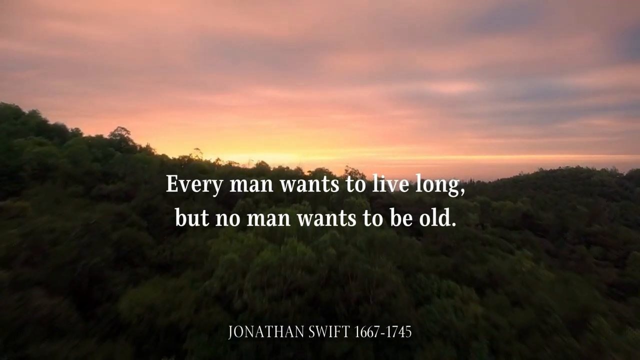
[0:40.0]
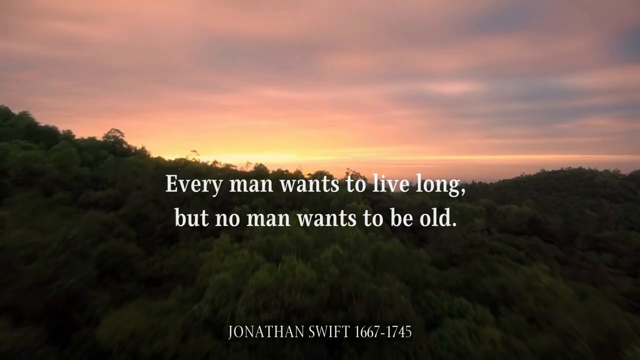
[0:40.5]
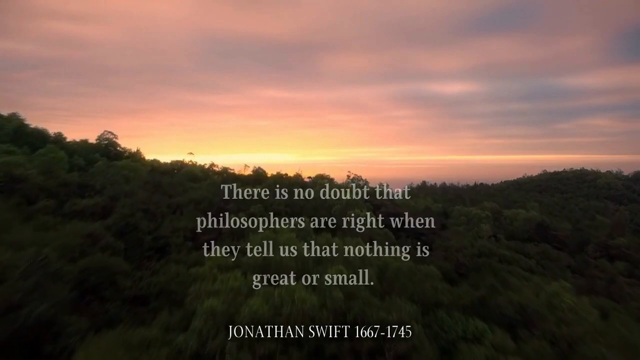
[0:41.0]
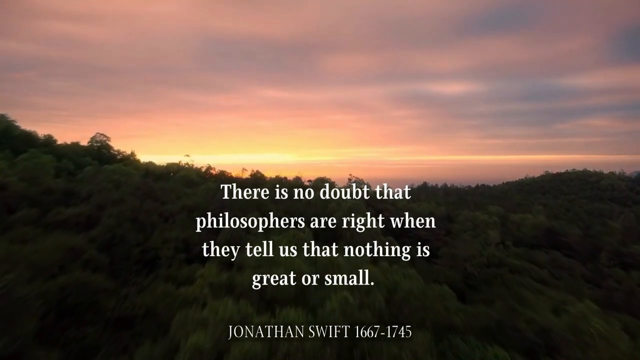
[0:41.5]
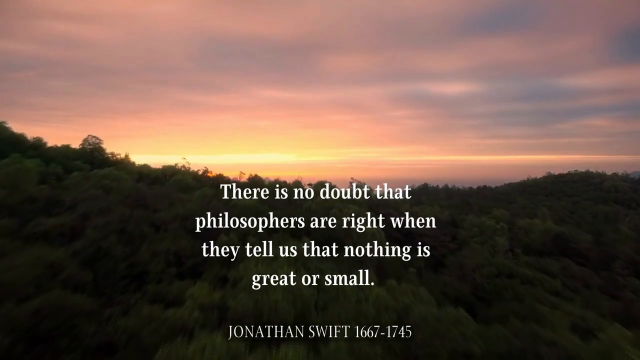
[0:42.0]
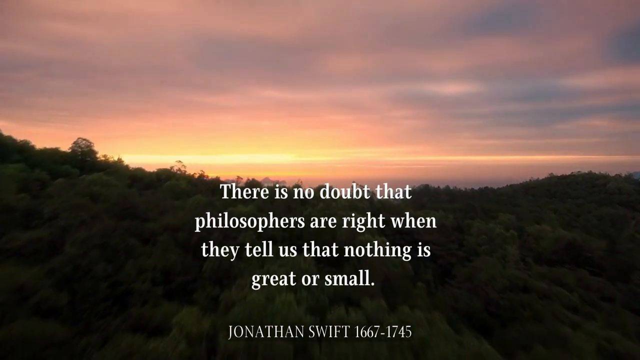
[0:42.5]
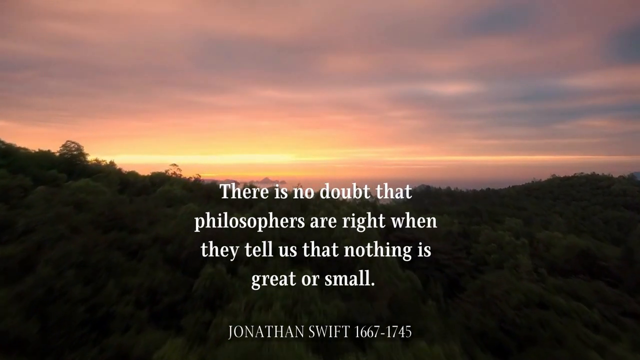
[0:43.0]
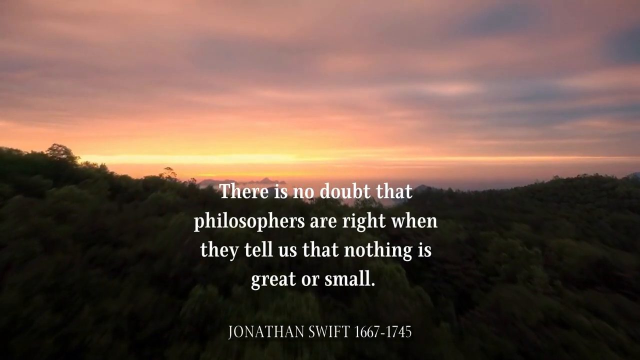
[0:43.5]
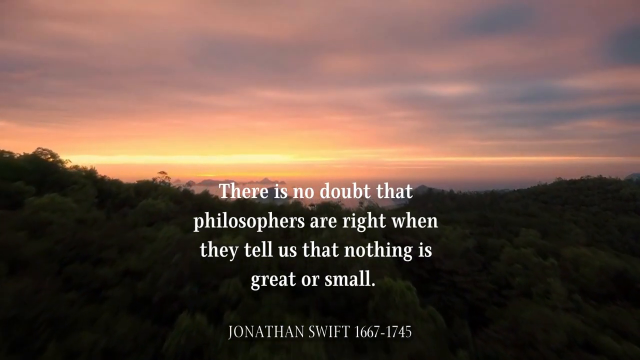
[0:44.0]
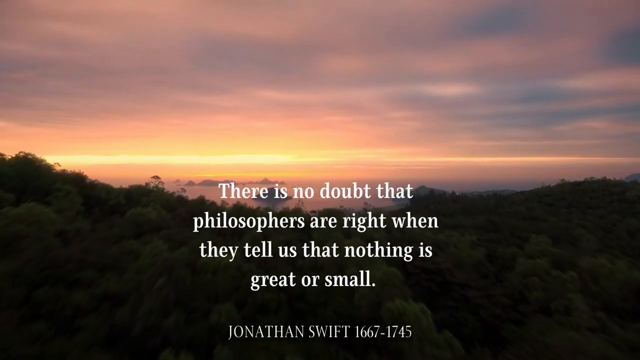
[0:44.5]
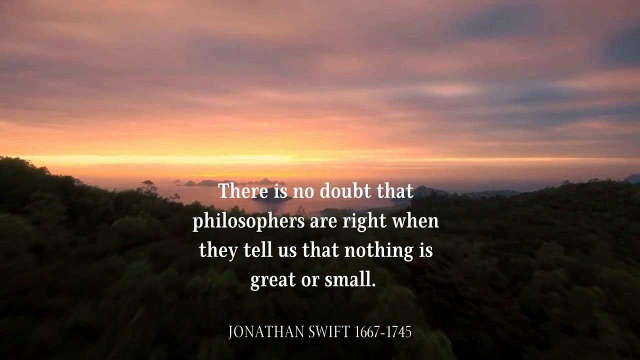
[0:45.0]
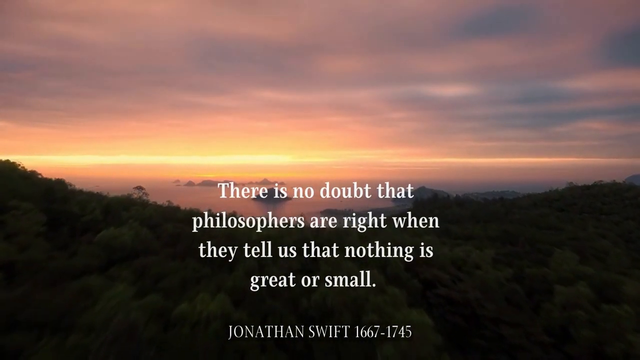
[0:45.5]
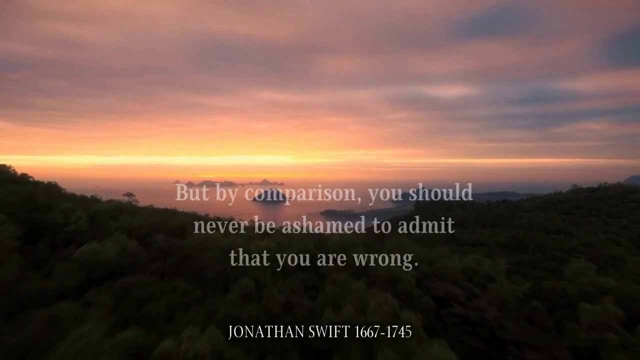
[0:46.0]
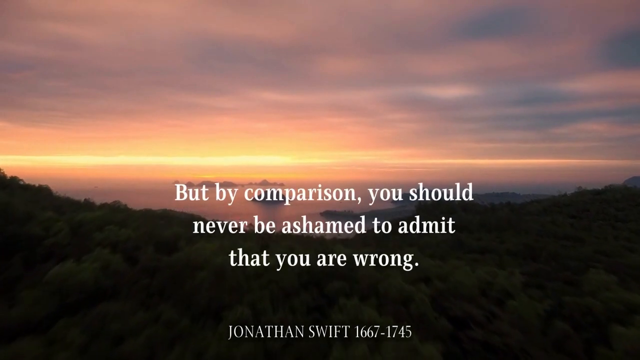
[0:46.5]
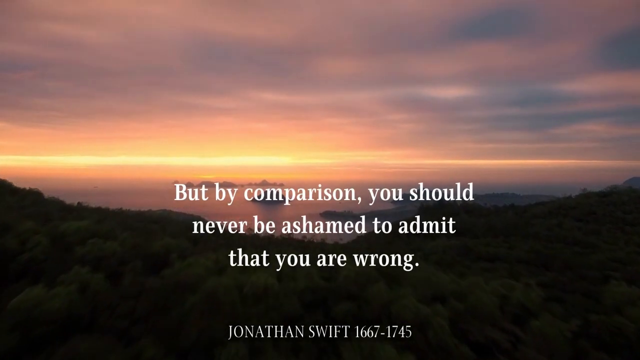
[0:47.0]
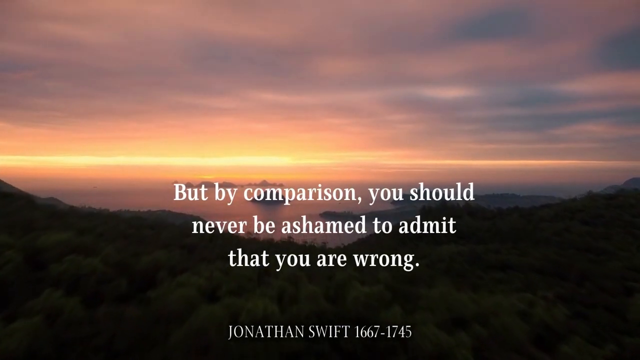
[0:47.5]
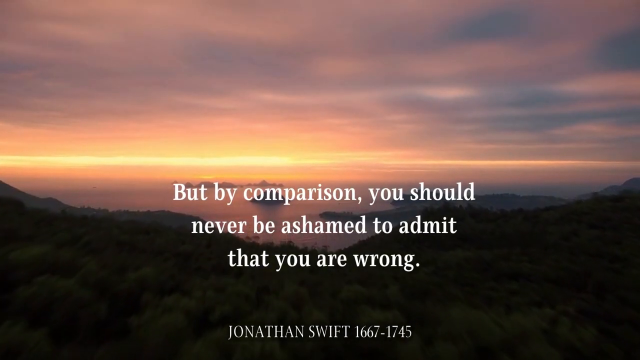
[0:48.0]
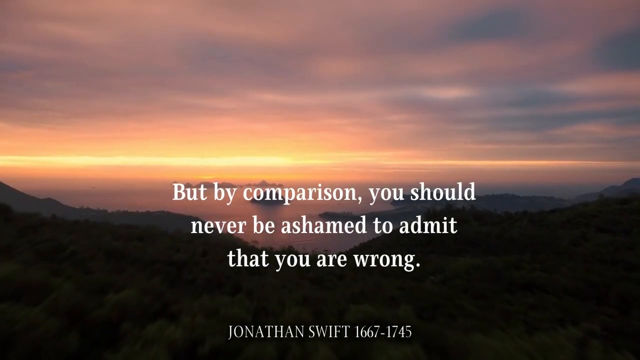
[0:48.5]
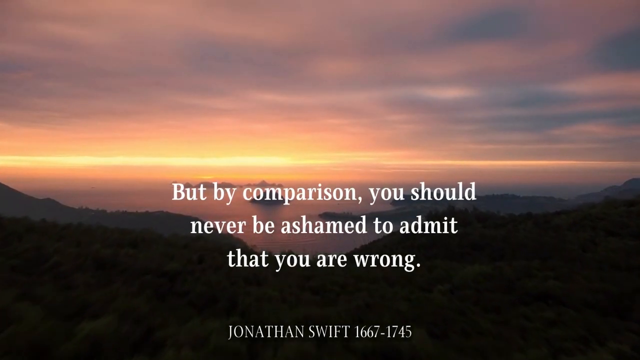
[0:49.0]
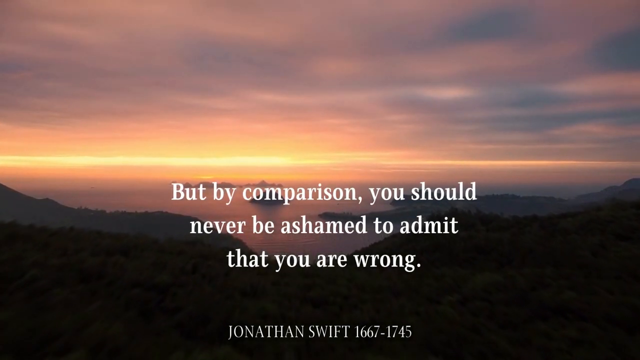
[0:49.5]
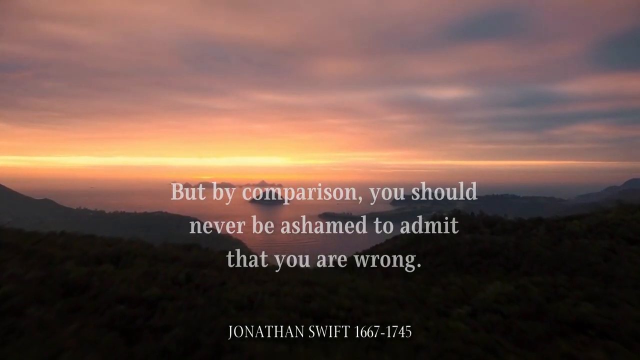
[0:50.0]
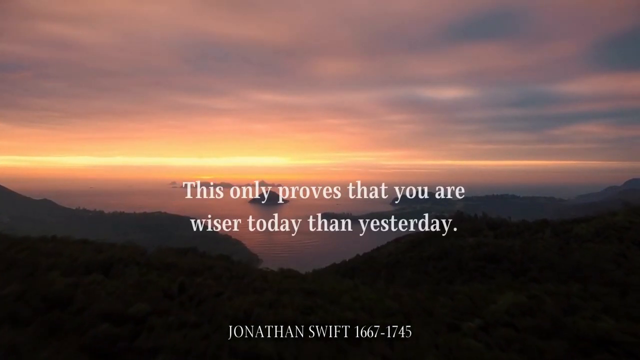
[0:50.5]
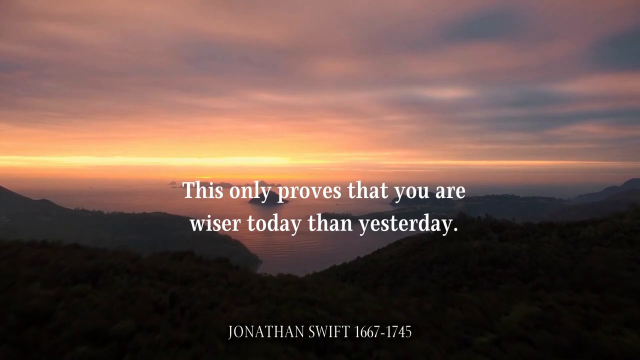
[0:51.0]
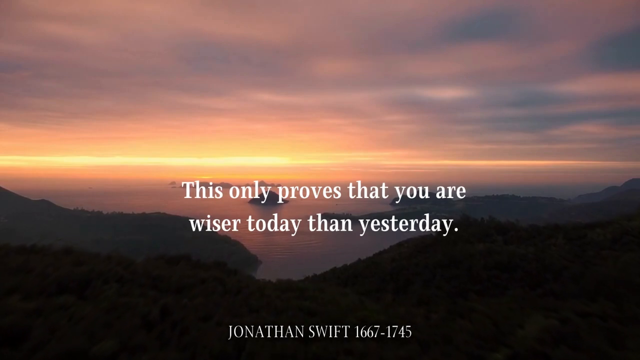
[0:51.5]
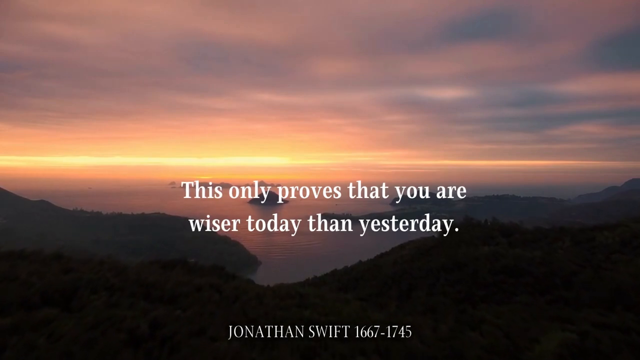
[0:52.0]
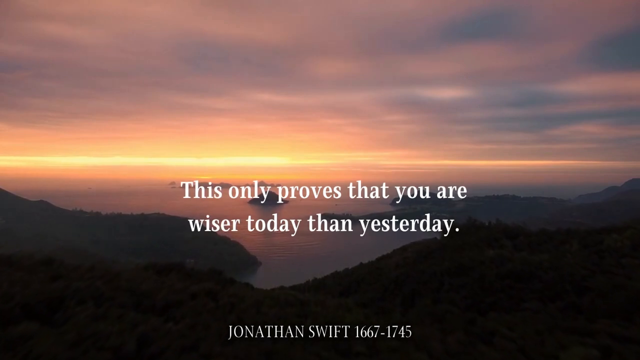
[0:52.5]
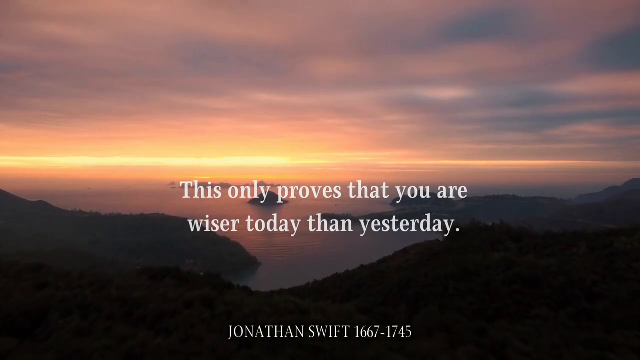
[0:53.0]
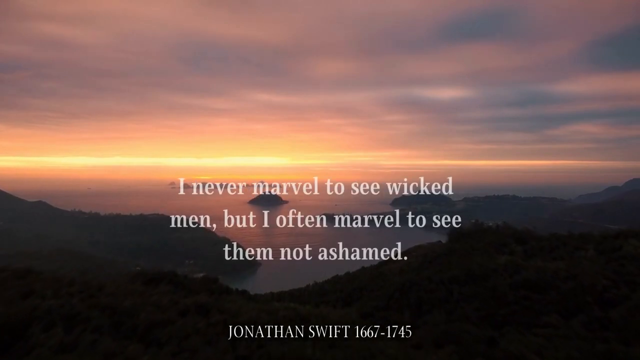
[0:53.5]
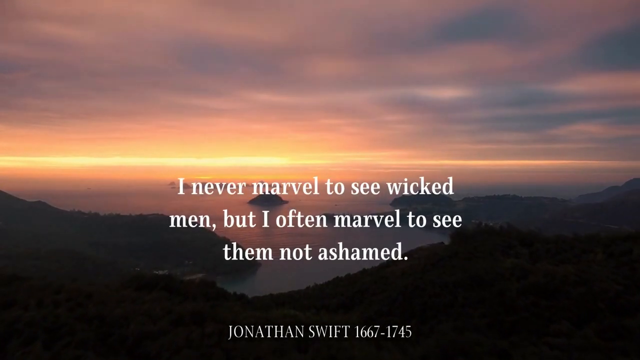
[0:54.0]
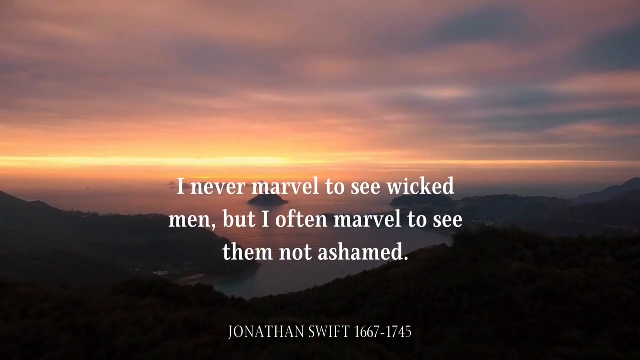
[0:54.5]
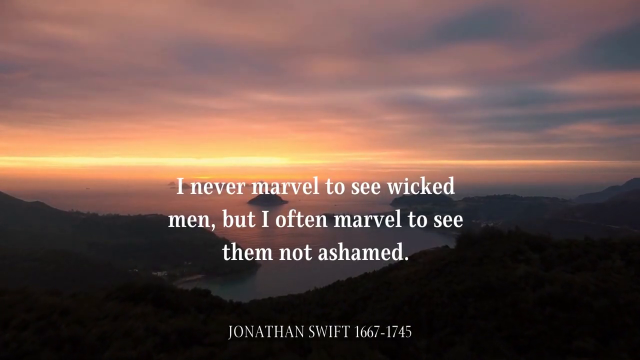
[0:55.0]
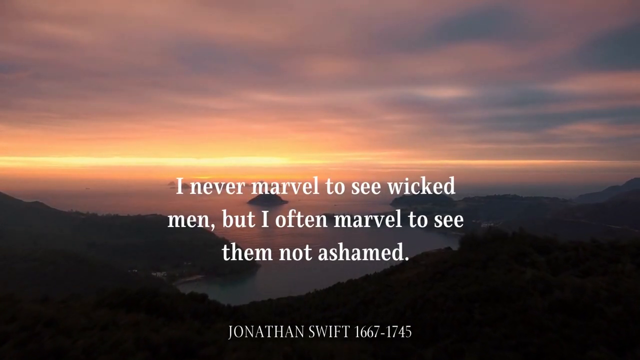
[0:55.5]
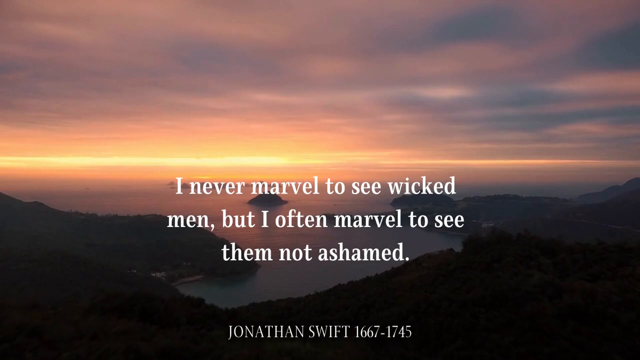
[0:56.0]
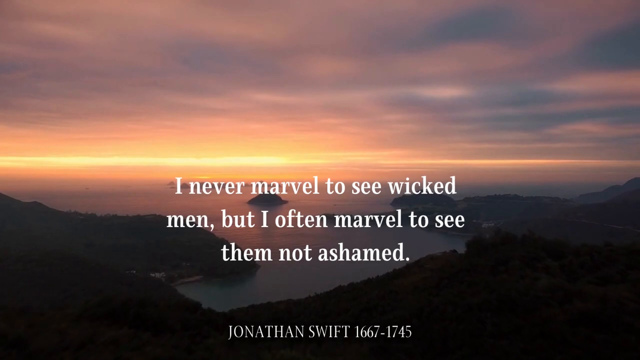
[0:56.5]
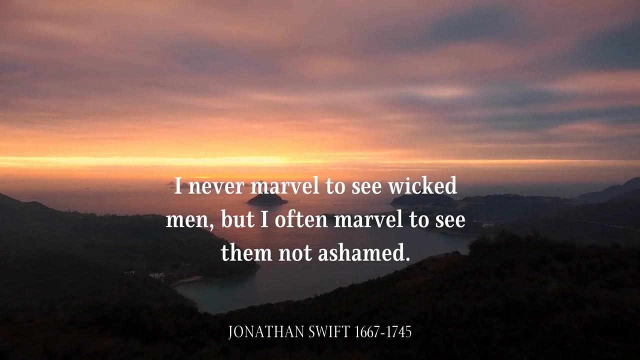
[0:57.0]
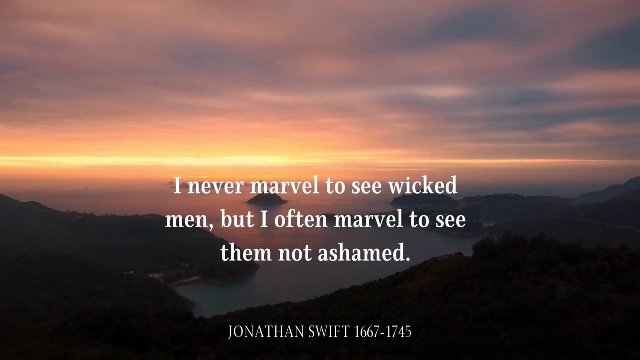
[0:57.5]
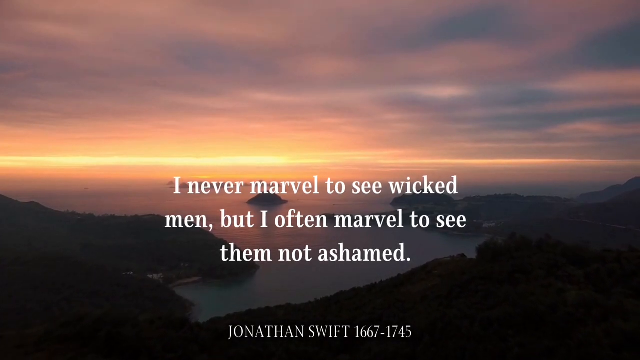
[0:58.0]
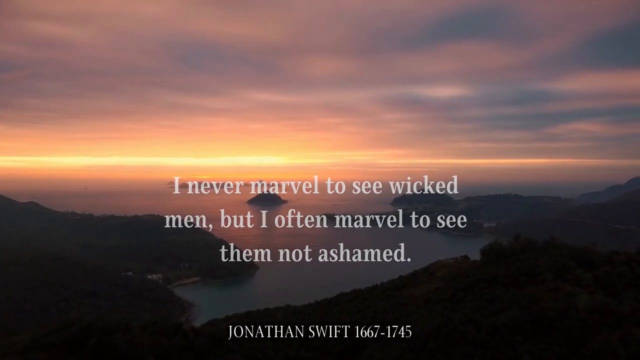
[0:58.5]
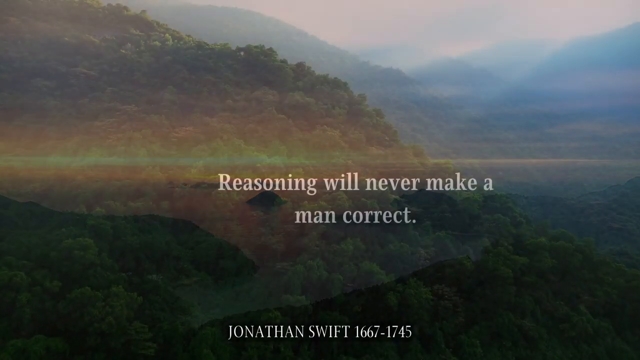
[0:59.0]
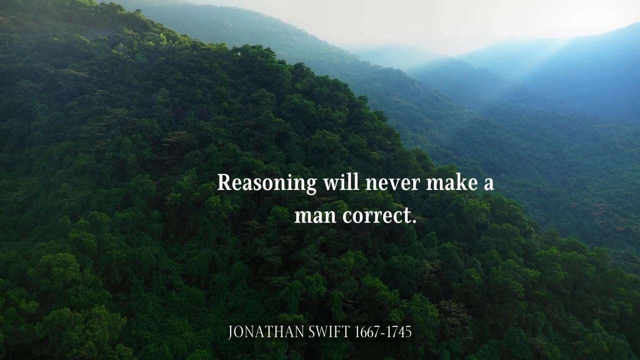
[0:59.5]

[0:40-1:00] A tropical-type forest, like Hawaii or Fiji, looks out onto a pink, cloudy sunset with light coming from the horizon. White text in the center of the screen reads "there is no doubt that philosophers are right when they tell us that nothing is great or small," with "Jonathan Swift, 1667" at the bottom. The background then flips to a horizon out over the ocean, with the same trees or type of trees and the same clouds and sunset, and some chains of islands are visible. The text disappears and new text reads "but by comparison, you should never be ashamed to admit that you are wrong." The camera pans toward the ocean. That text is replaced by "this only proves that you are wiser today than yesterday," and then by "I never marvel to see wicked men, but I often marvel to see them not ashamed."